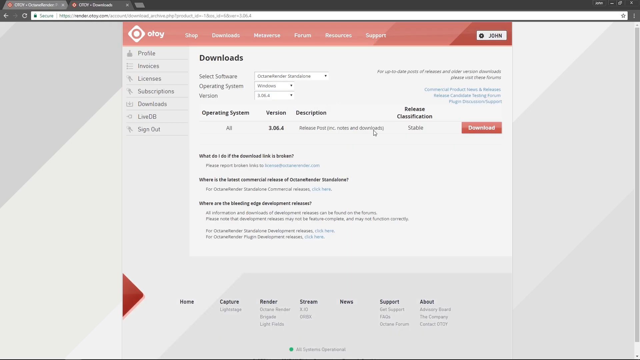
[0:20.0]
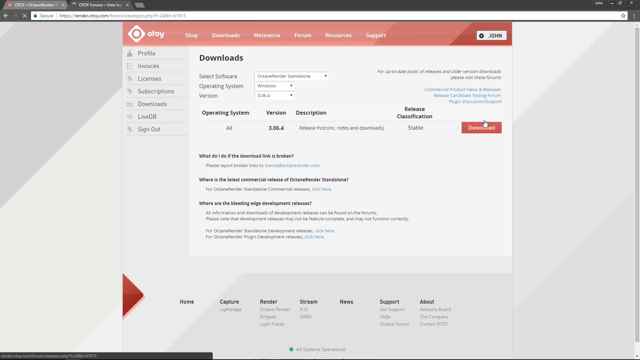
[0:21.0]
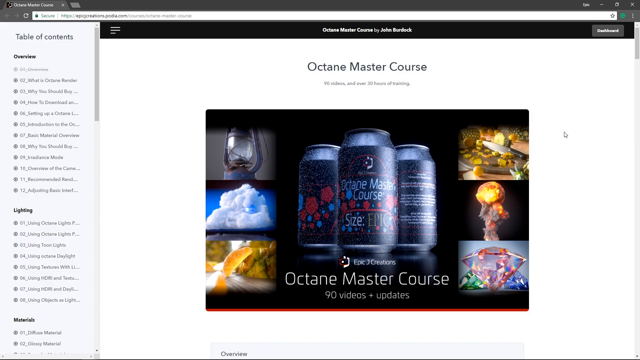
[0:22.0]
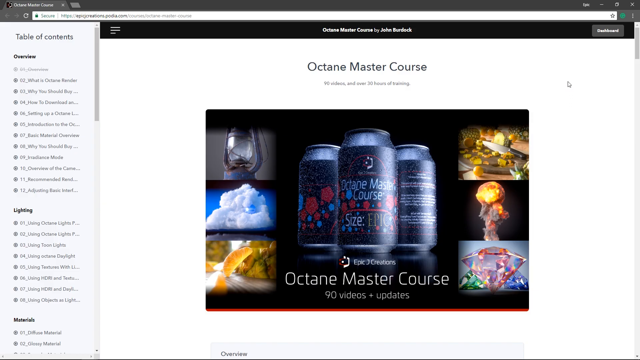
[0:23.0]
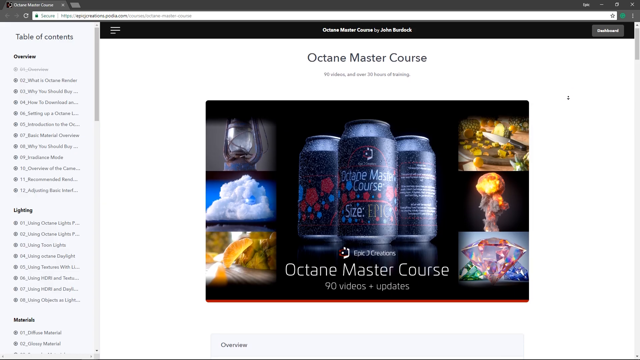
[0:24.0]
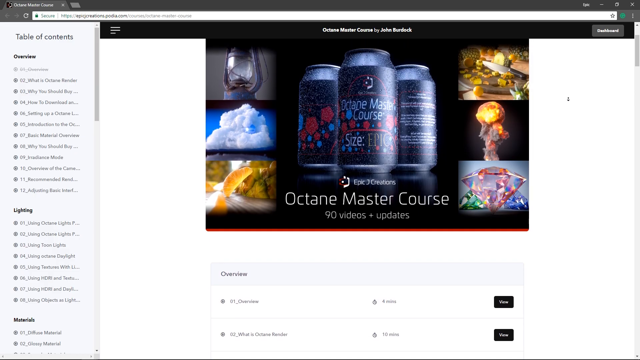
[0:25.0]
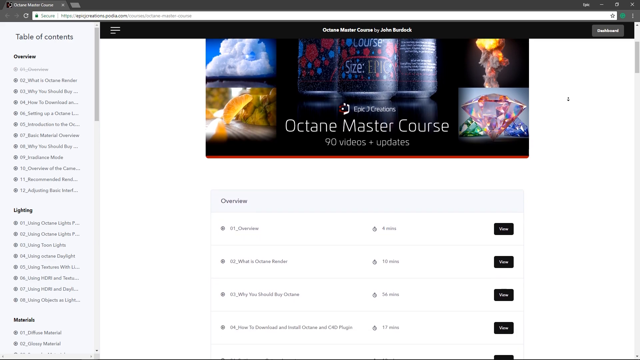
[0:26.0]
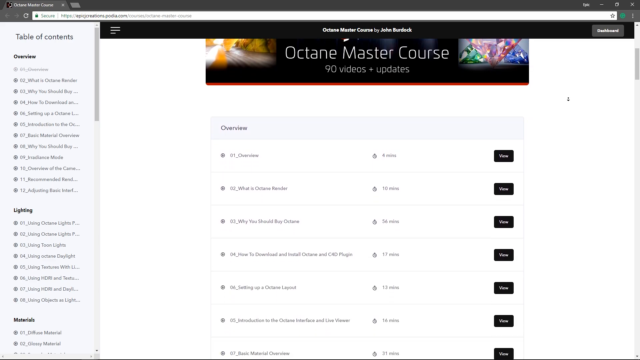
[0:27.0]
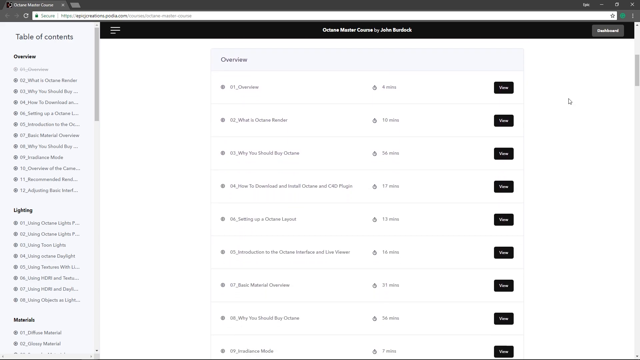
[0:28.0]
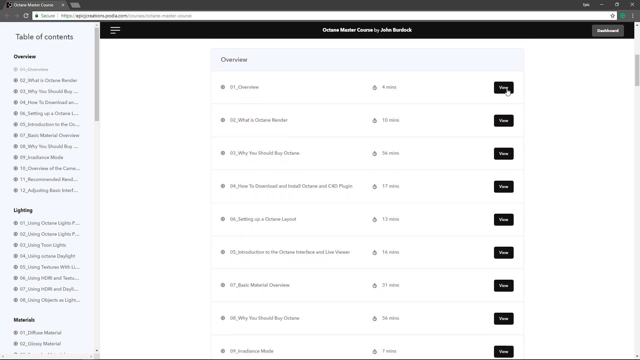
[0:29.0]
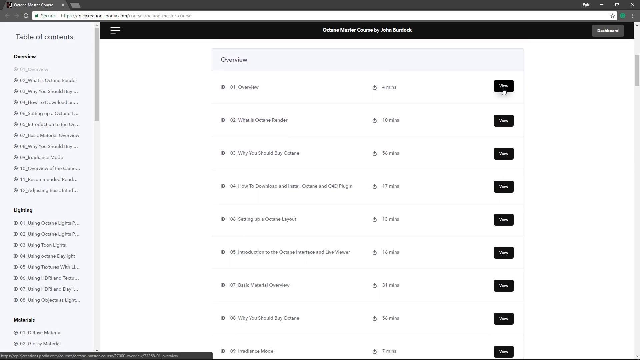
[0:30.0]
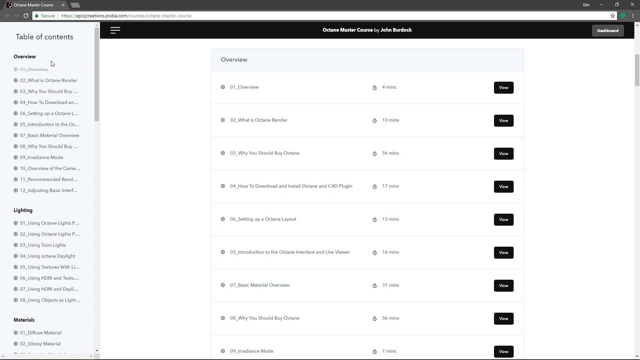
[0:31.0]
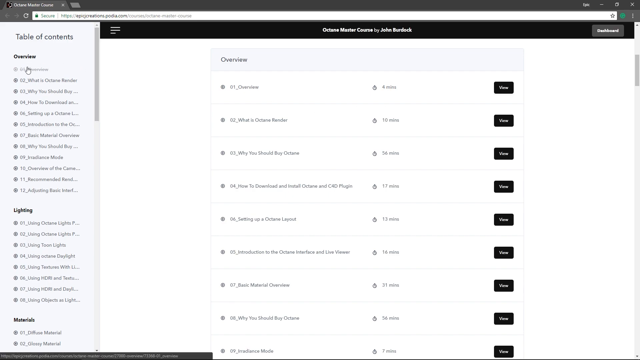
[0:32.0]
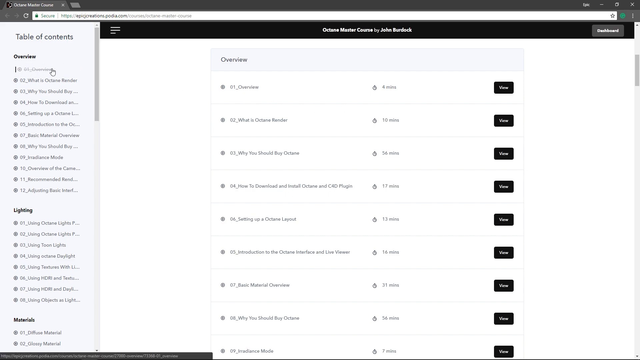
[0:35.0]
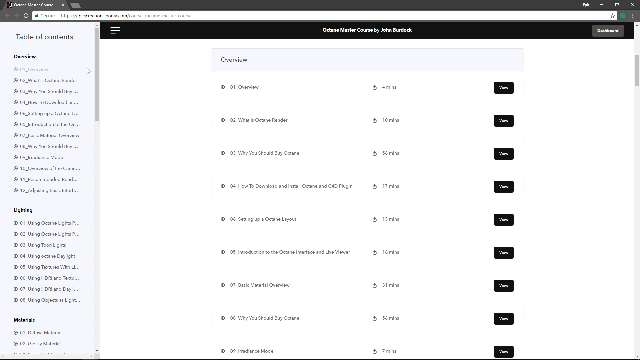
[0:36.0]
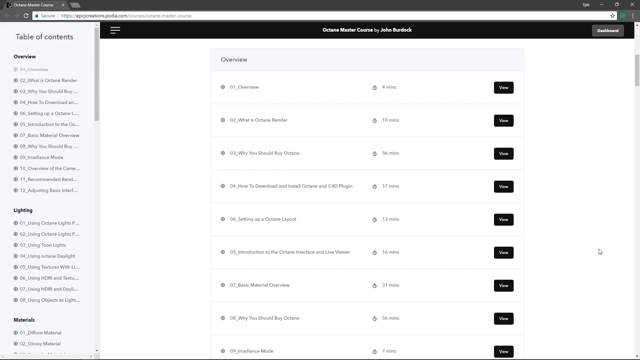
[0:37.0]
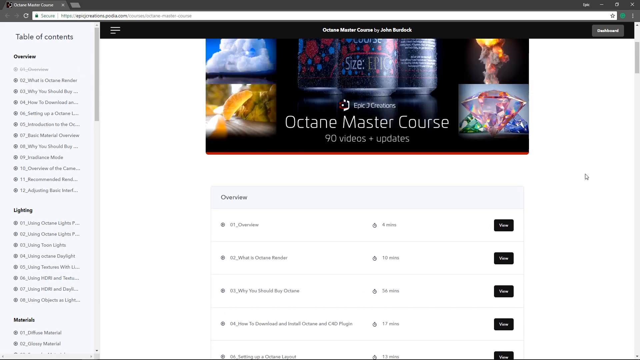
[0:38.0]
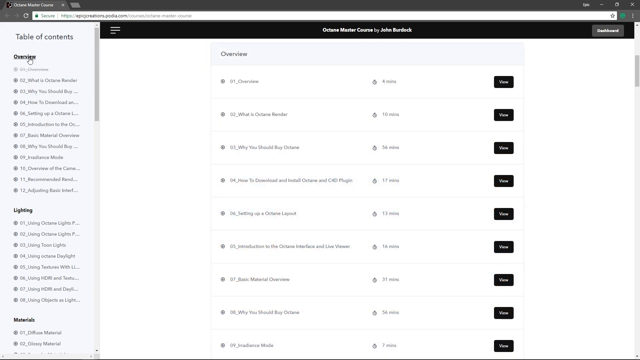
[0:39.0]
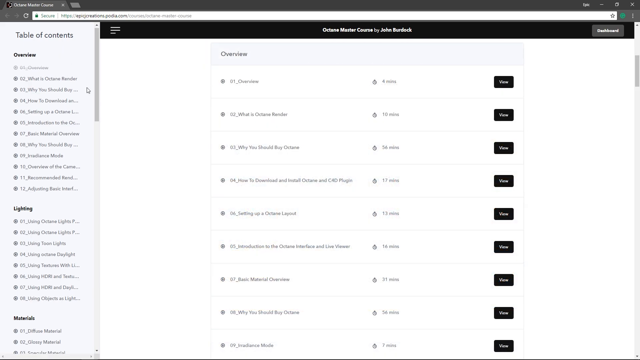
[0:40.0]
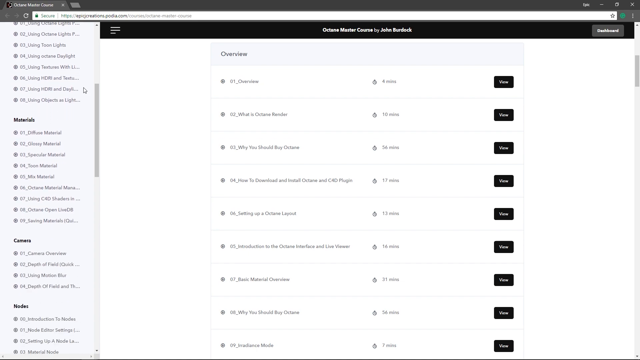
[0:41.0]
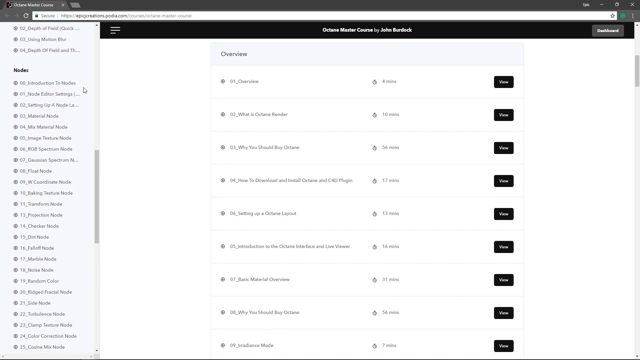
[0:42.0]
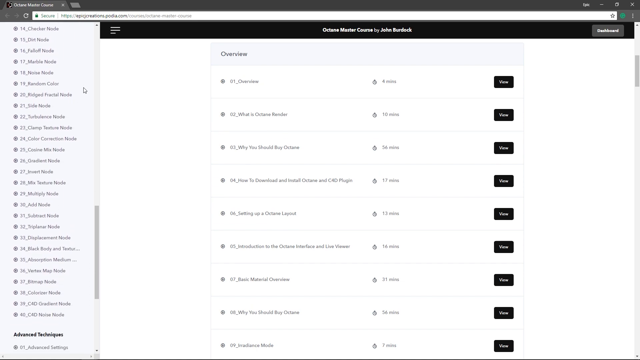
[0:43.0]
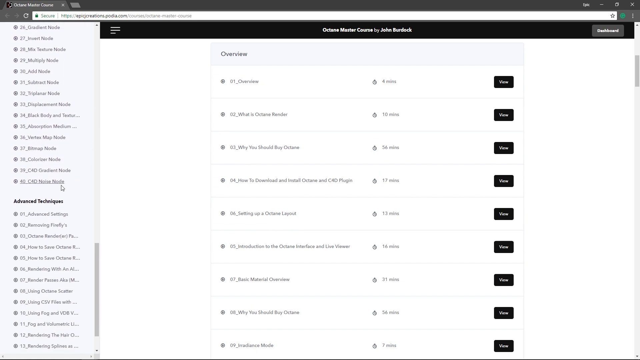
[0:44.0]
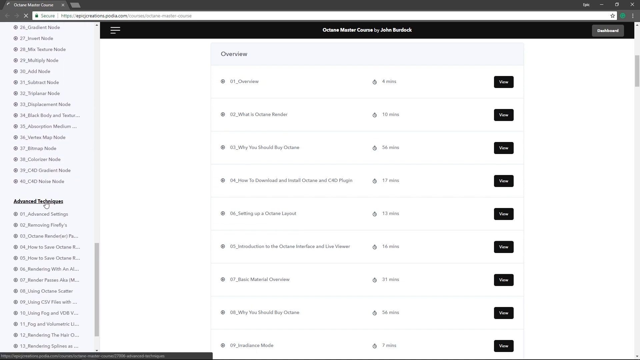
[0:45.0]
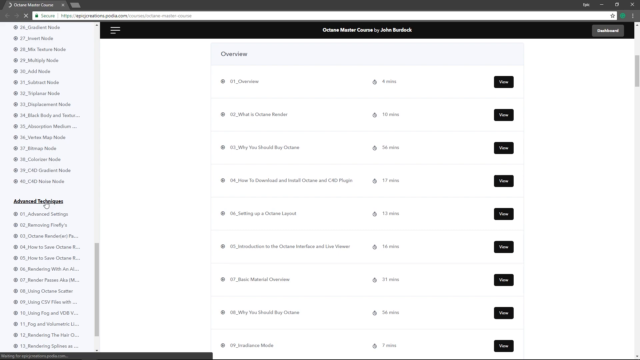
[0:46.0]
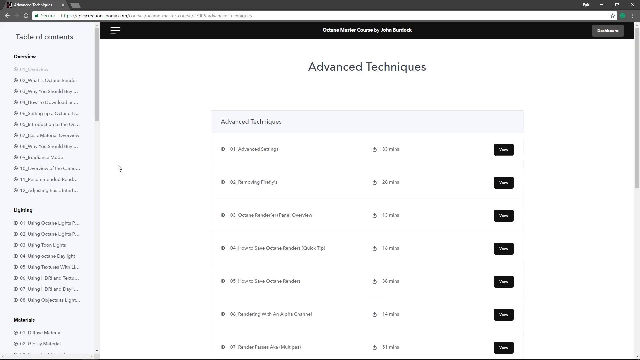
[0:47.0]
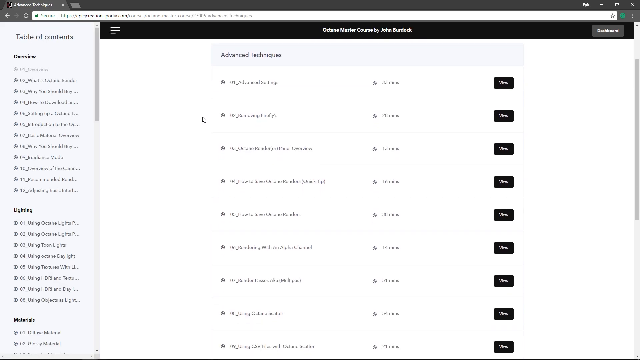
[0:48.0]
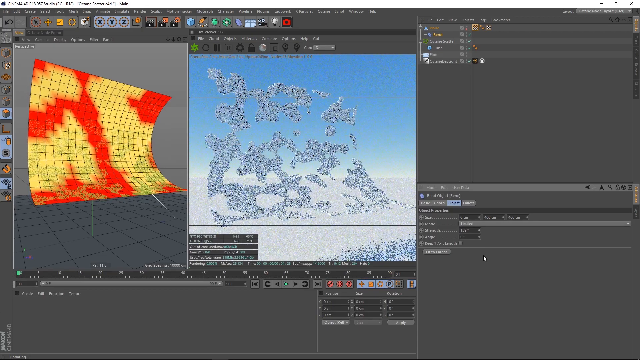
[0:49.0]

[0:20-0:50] The mouse moves over to the download button of the selected version. After download is clicked, the website turns white except for the red header at the top, while keeping its design. The video then cuts to another website showing "Octane MasterCourse", with an image below showing a front page of the course. A table of contents is on the left of the screen. The view zooms down to an overview of the course, with sections bearing different titles and a view button beside each one. The mouse moves to the overview underneath the table of contents and hovers over the first option. It moves back, and the page scrolls up to the front page of the course, where a picture of soda cans in the center carries the words "Octane MasterCourse". The cans are black with some red and blue dots. To their left and right are a bunch of rendered images in front of a black screen. The screen fades back down to the sections that can be viewed. The mouse moves back to the table of contents on the left side of the screen and scrolls down through all the contents. It moves down to the section labeled "Advanced Techniques" and clicks it, opening that section in the middle of the screen. The screen then cuts to the software Cinema 4D, showing an object within it.